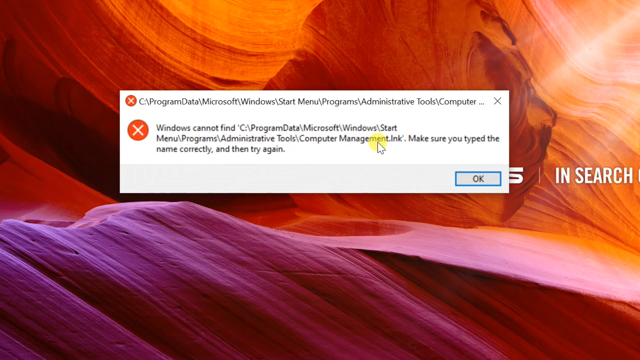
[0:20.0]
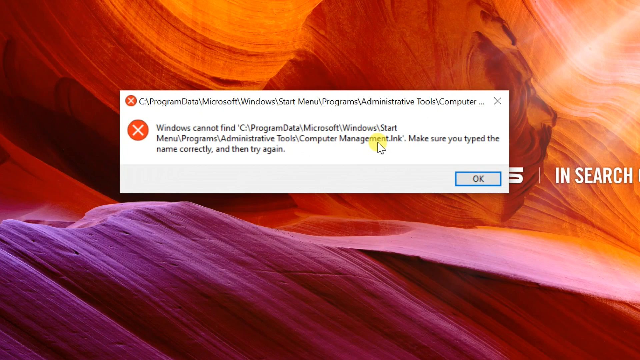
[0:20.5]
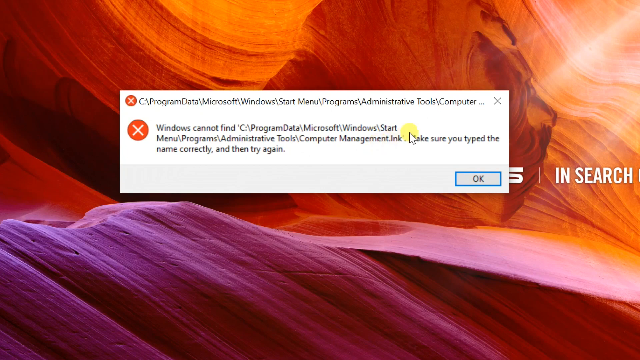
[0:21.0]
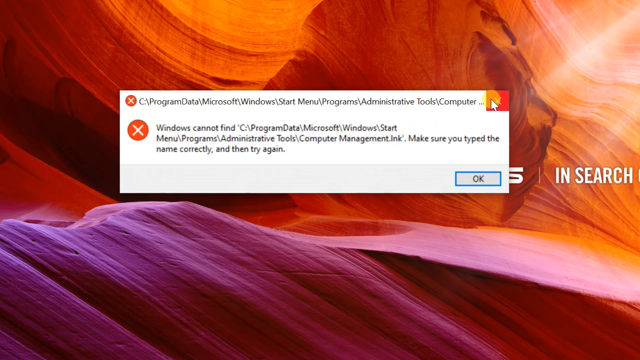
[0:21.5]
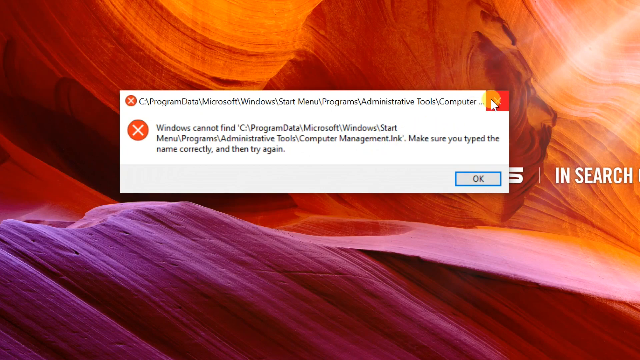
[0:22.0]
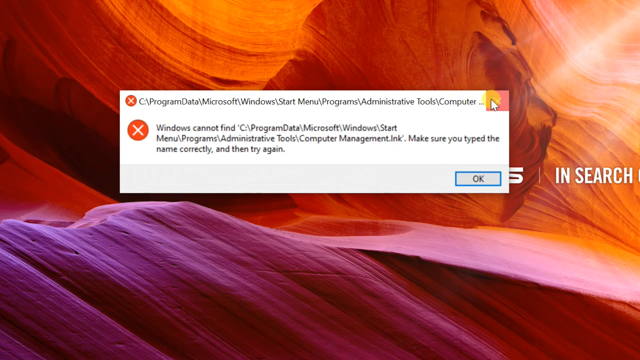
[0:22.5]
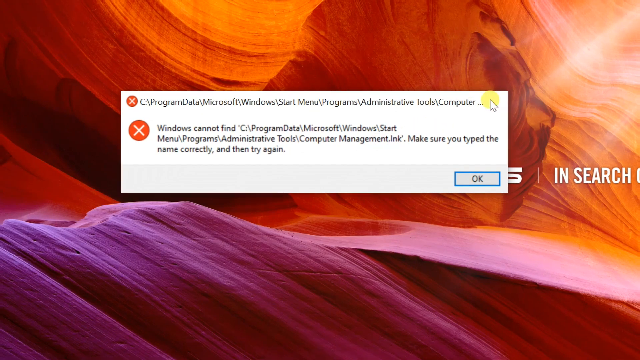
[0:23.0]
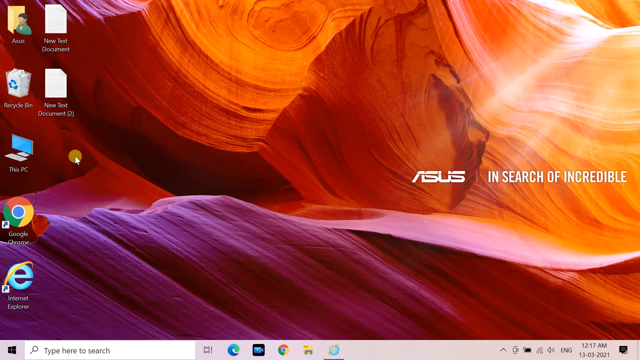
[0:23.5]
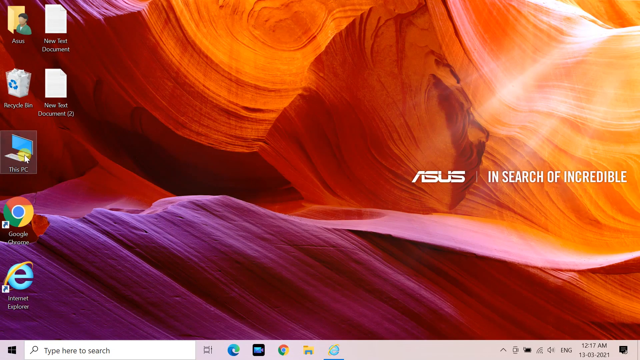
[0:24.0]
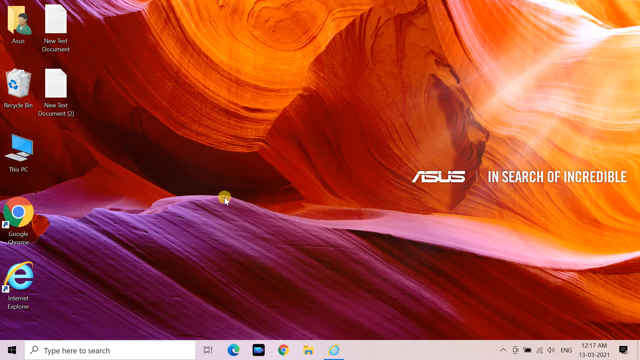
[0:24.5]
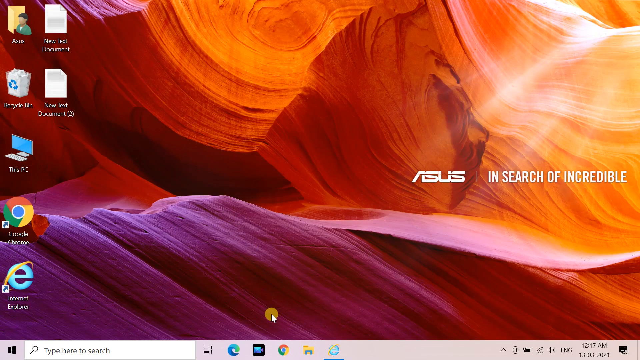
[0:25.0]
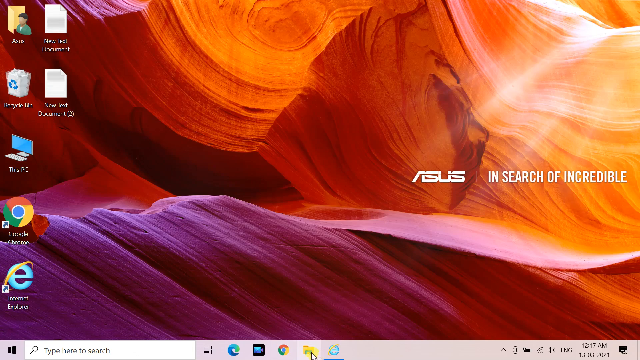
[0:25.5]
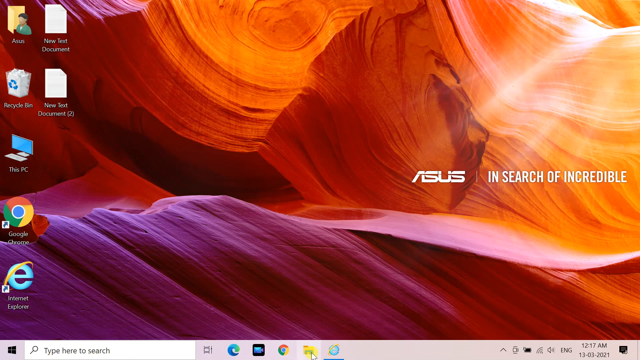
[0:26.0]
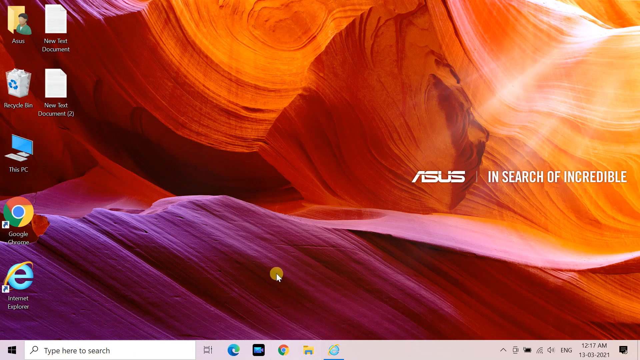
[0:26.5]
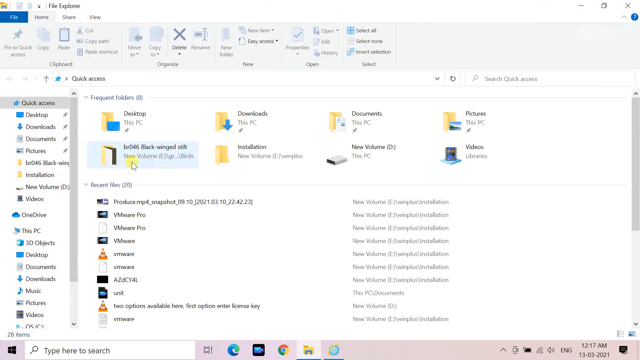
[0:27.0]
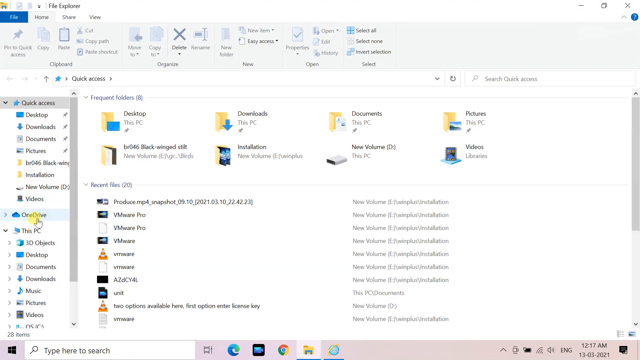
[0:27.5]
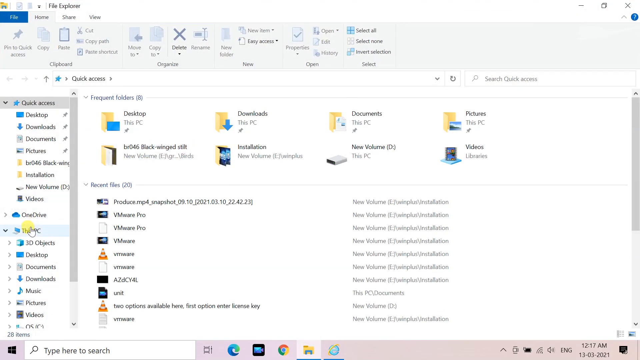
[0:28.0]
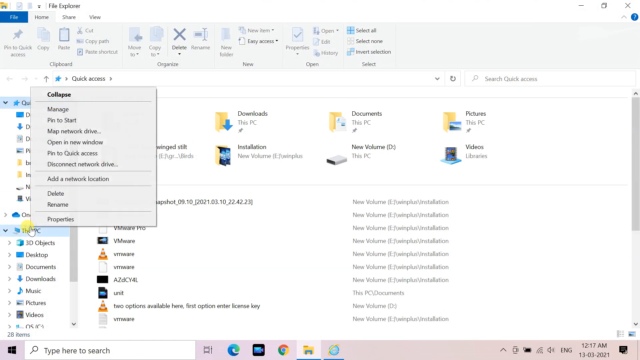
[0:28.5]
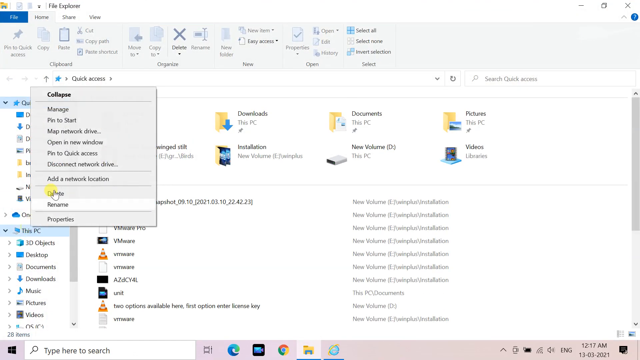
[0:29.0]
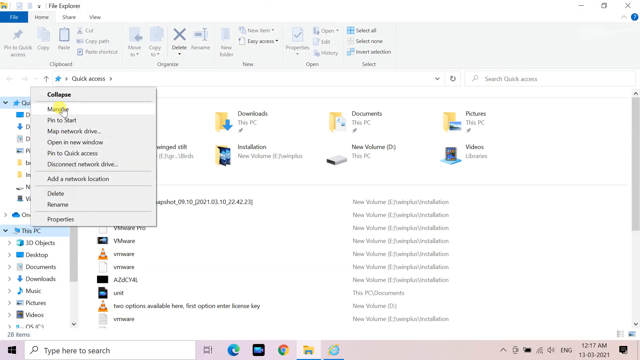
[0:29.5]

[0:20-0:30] An error message has popped up saying Windows cannot open a certain file. The user clicks the X in the corner to close it. Then they click on the Documents tab, click on this PC again, and click Manage. The screen appears to be mirrored as the user tries to open the folder. The error reads: "Warning, cannot find the program data, Microsoft, Windows, Start Menu Programs, Administrative Tools, Computer Management. Make sure you type the name correctly and then try it again." Rather than clicking OK, the user clicks the X.